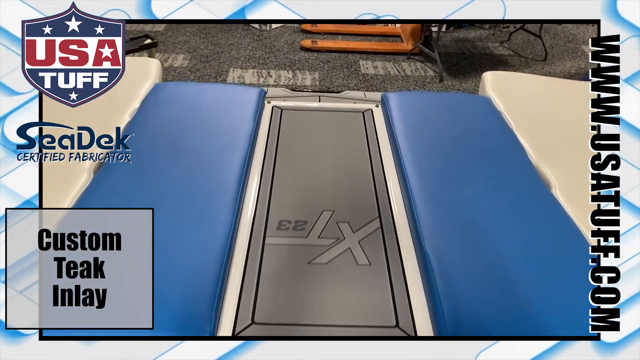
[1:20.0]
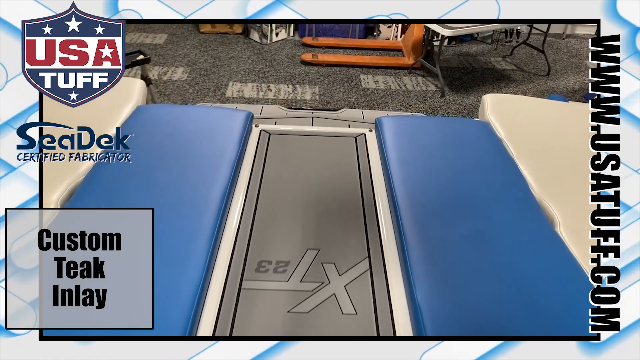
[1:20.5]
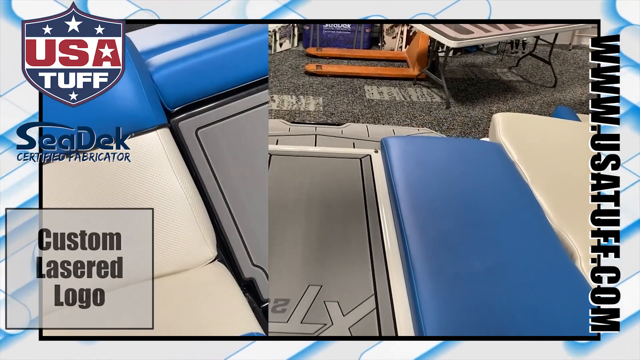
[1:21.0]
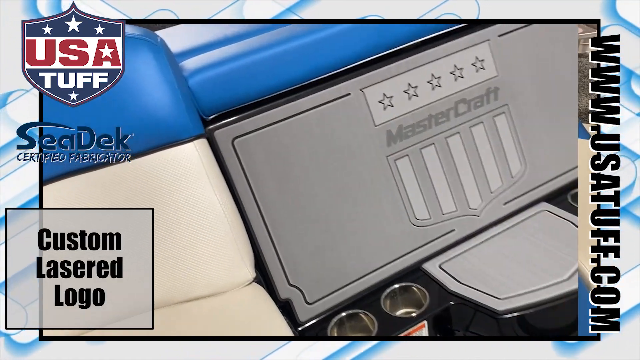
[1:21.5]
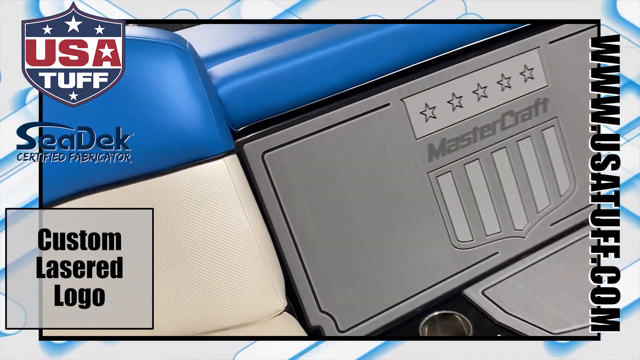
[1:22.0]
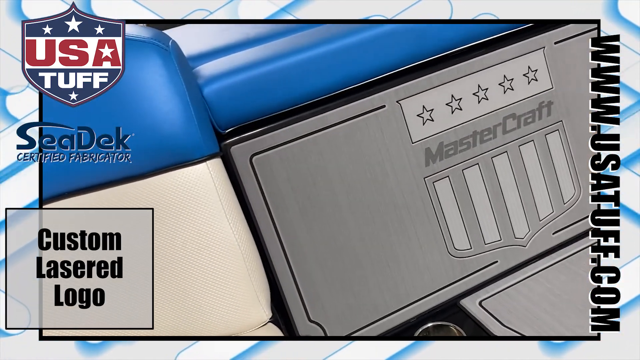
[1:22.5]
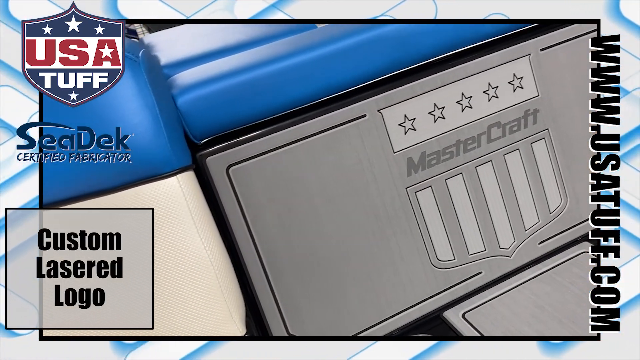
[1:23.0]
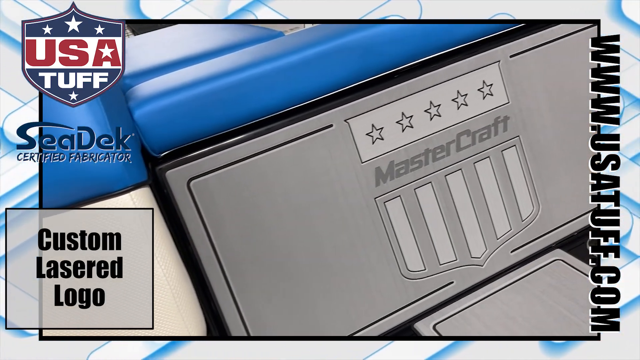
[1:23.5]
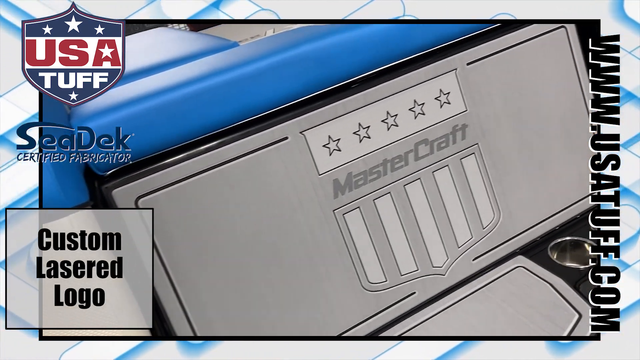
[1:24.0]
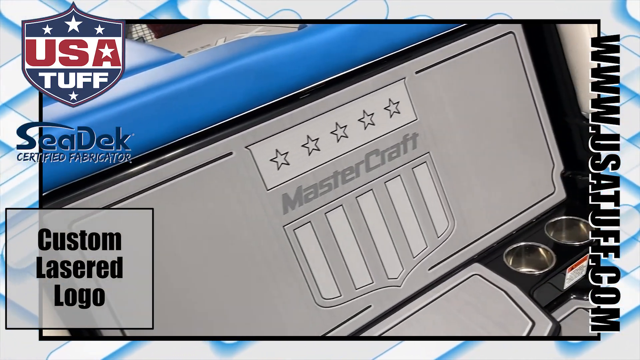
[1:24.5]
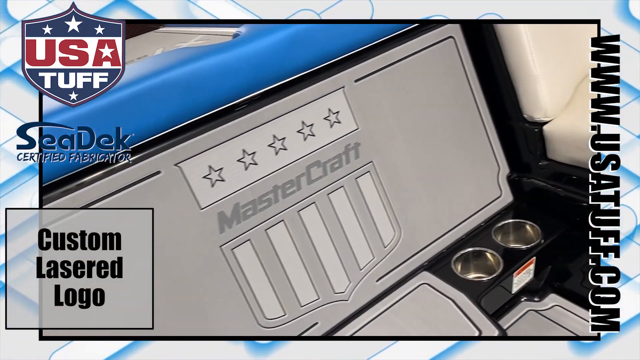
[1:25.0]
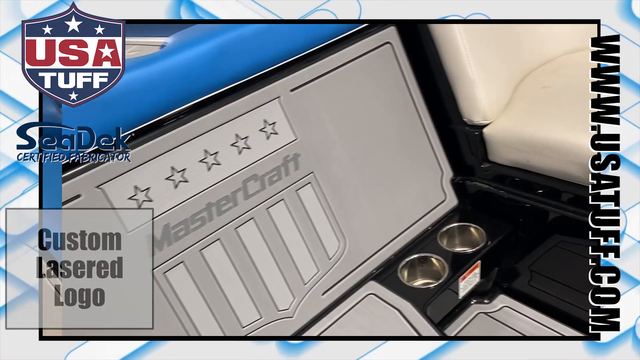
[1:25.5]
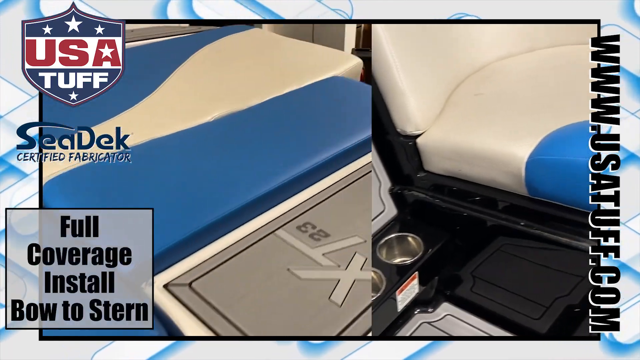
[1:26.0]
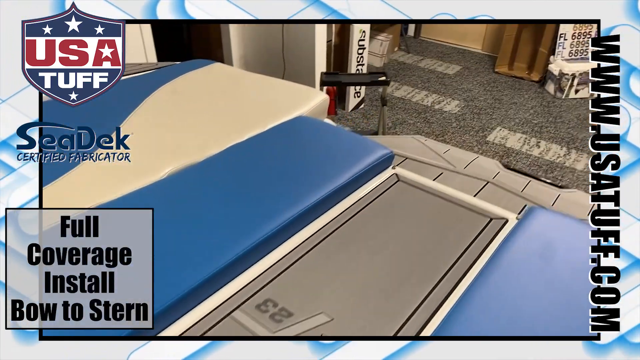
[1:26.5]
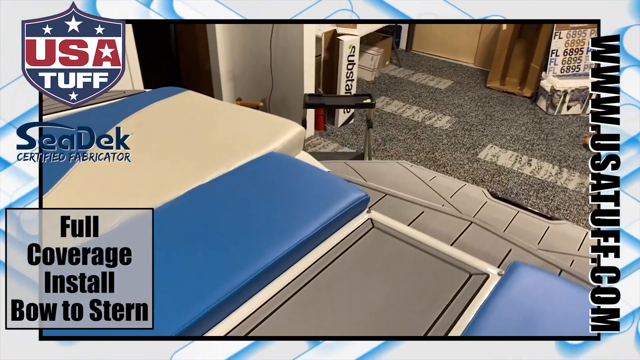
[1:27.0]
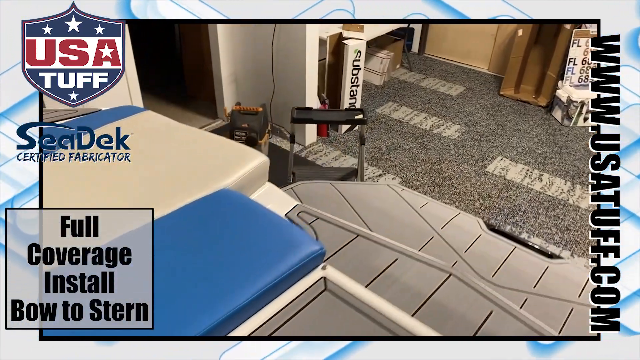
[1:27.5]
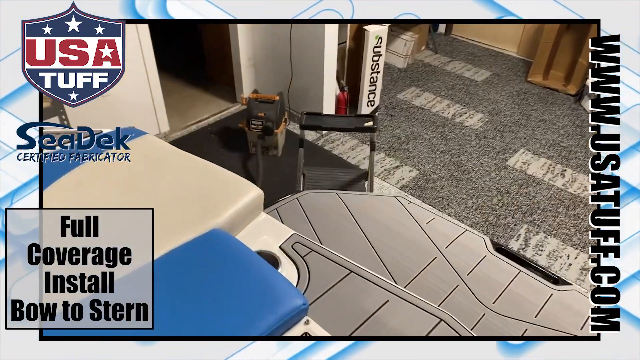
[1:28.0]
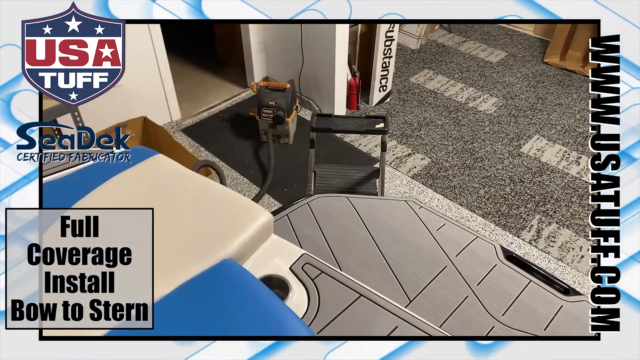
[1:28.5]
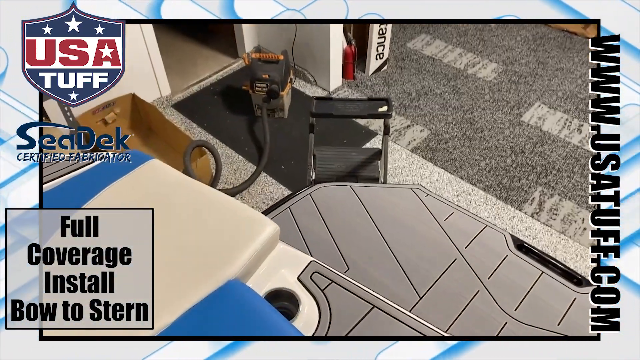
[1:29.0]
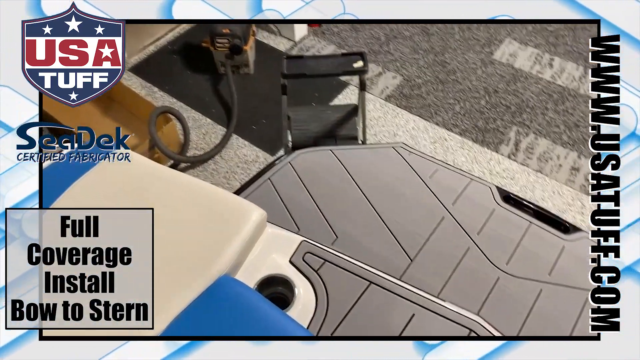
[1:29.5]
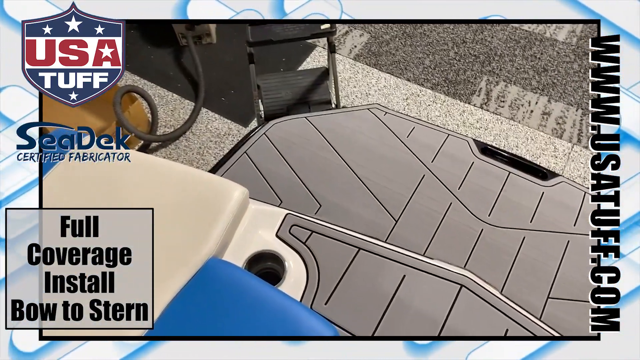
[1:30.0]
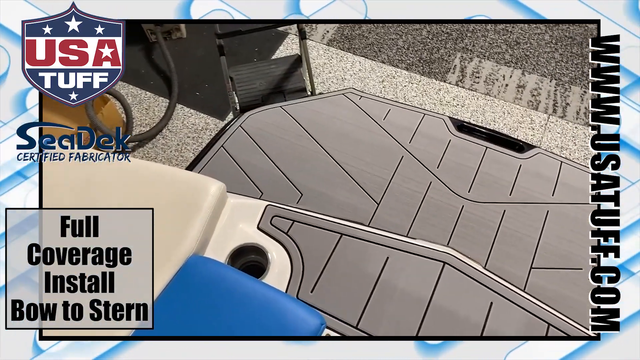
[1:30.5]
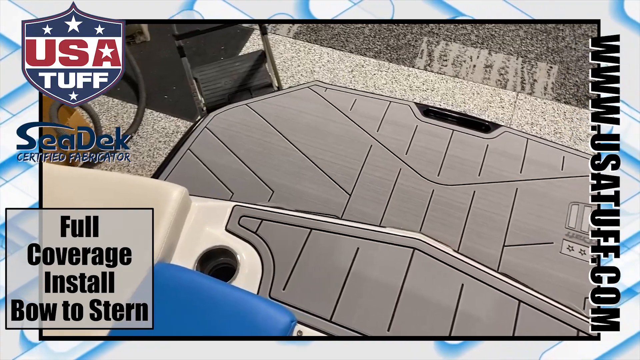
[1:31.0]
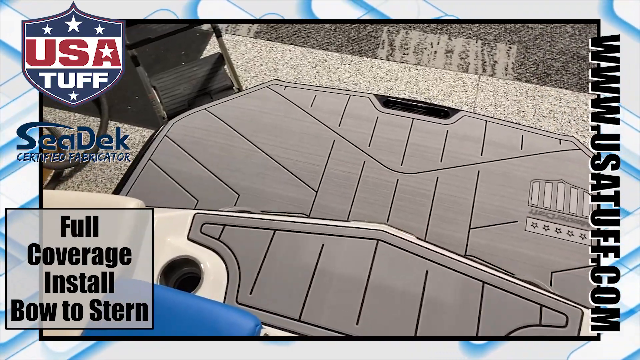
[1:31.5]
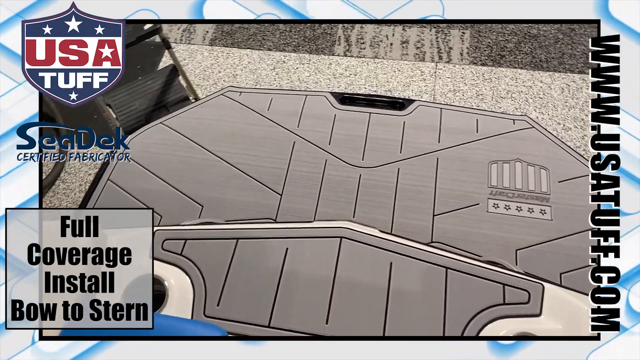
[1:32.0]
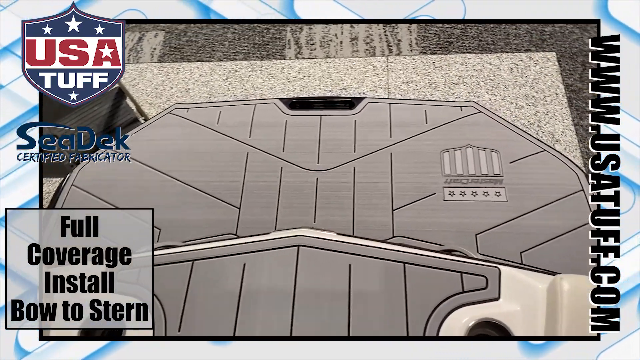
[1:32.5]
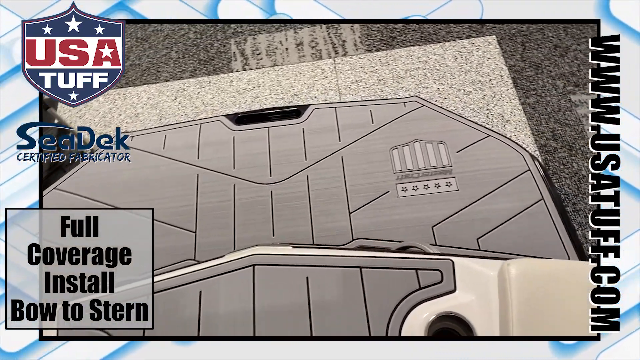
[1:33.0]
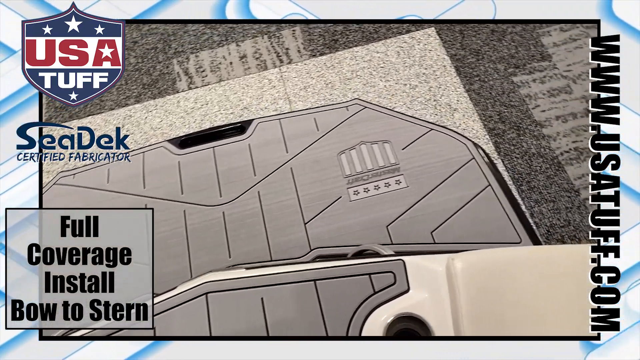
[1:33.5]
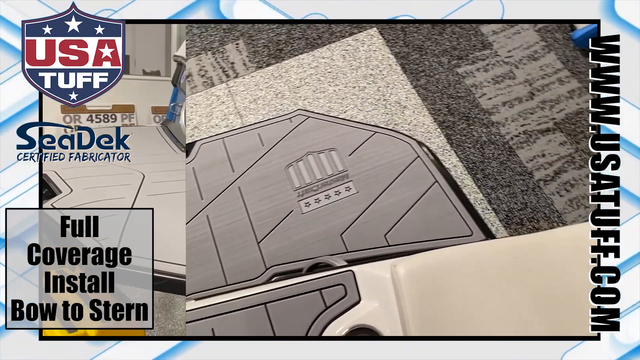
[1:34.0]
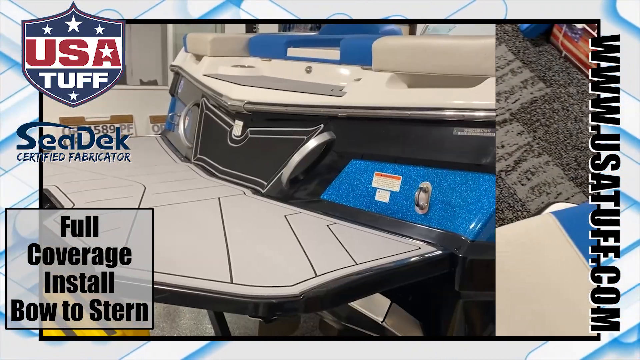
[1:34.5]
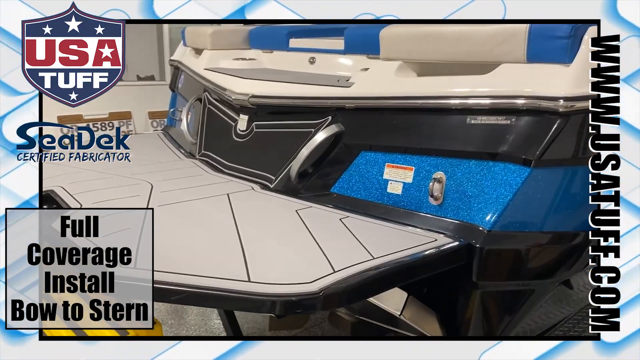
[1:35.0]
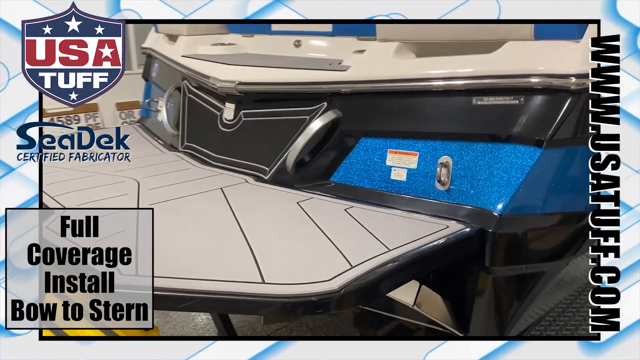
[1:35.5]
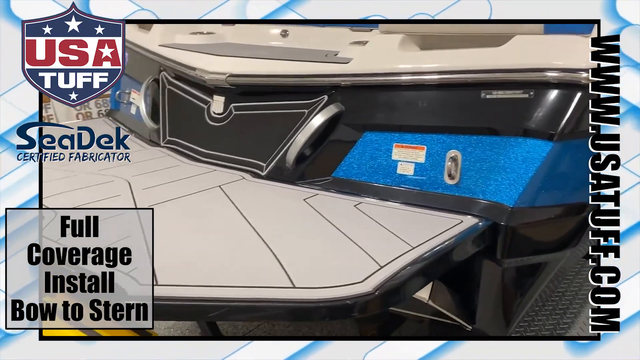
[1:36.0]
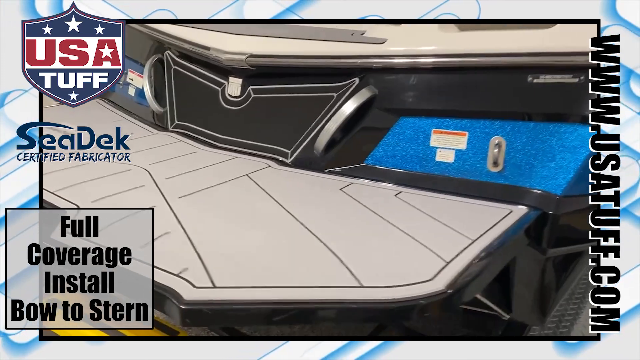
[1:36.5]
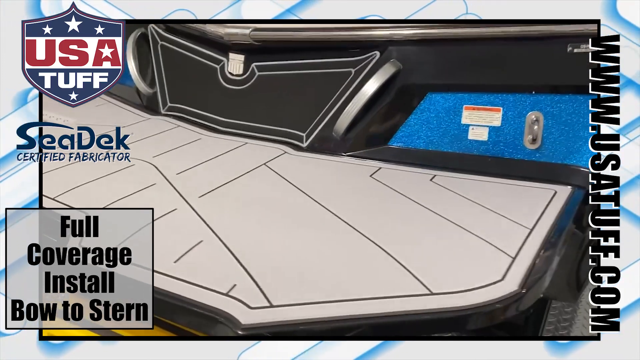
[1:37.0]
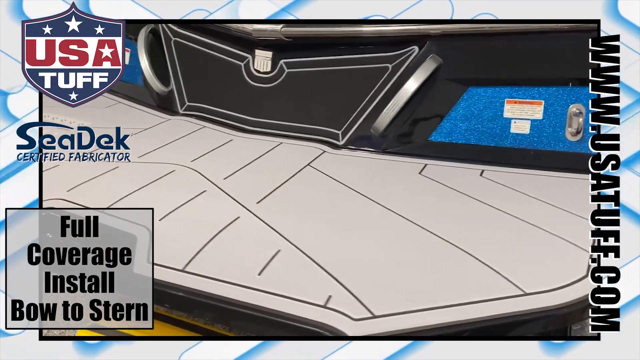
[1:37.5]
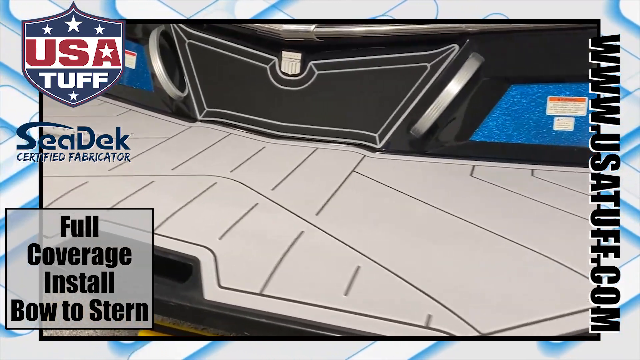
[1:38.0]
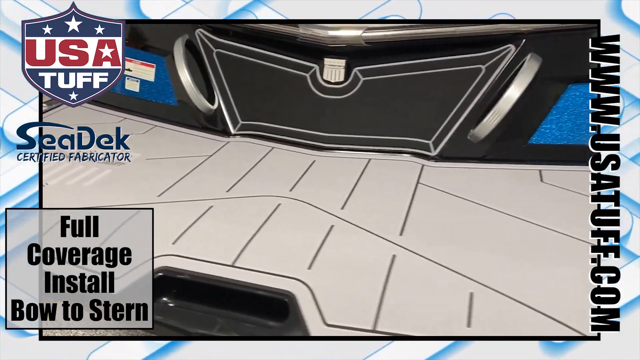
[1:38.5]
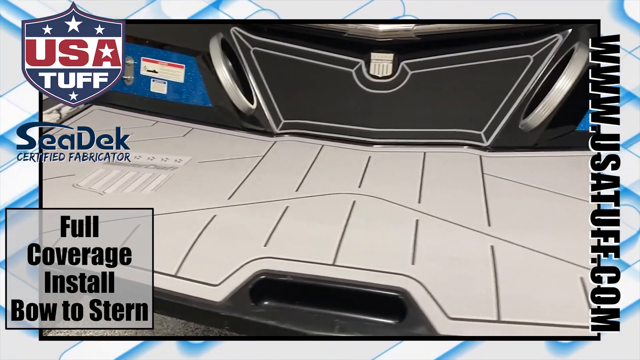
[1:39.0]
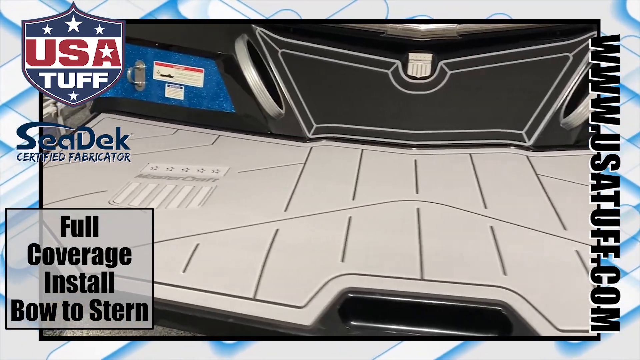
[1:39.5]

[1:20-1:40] In the lower left-hand corner, in bold black on a white rectangular box, text reads "CUSTOM", with "TEAK" and "INLAY" on the lines below. The words in the box change to "CUSTOM", "LASERD" and "LOCO" on successive lines. The words change again to "FULL", "COVERAGE", "INSTALL" and "BOLD STERN". The video continues to show around the boat and then shows the back of the boat.